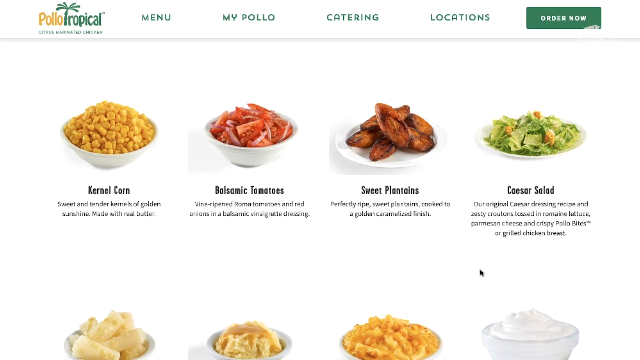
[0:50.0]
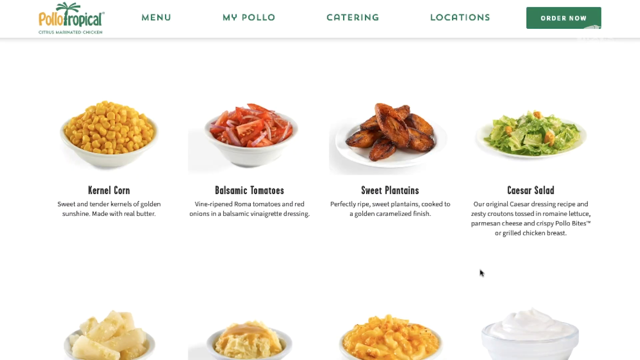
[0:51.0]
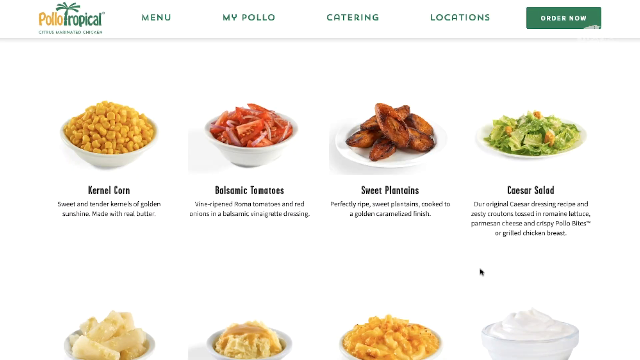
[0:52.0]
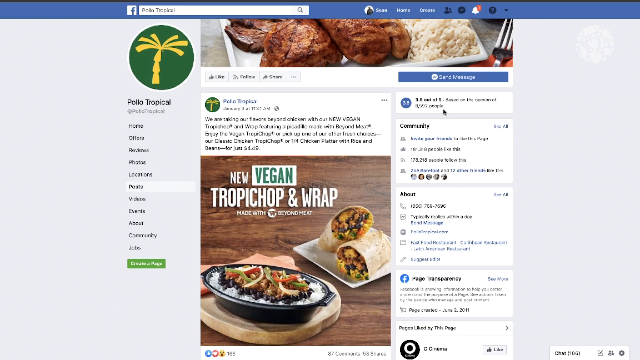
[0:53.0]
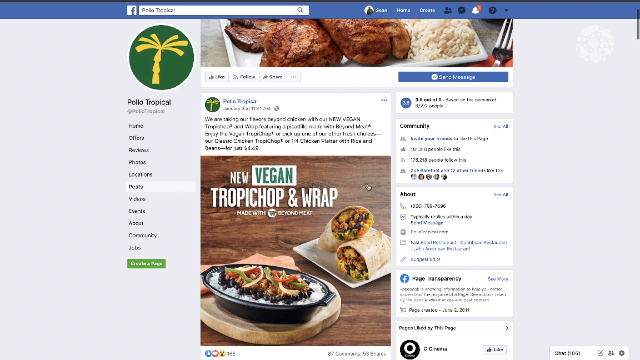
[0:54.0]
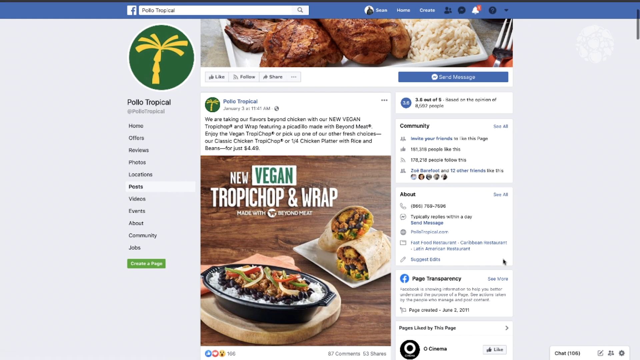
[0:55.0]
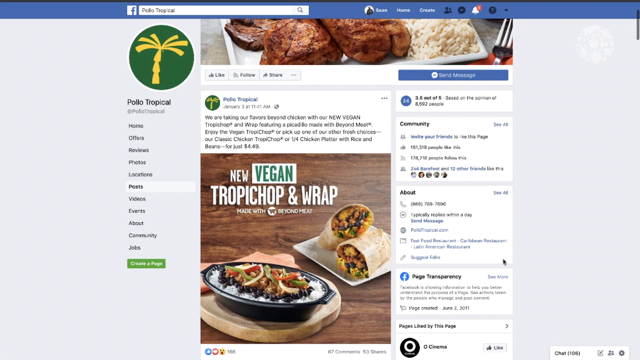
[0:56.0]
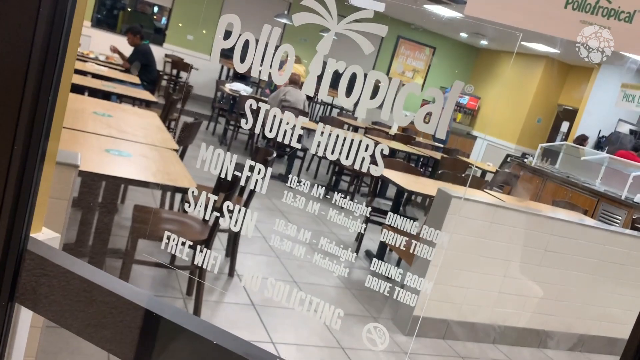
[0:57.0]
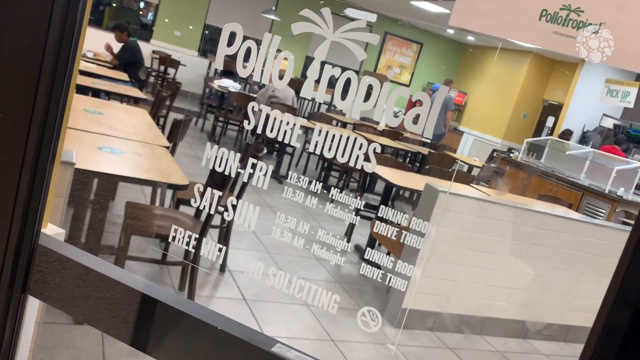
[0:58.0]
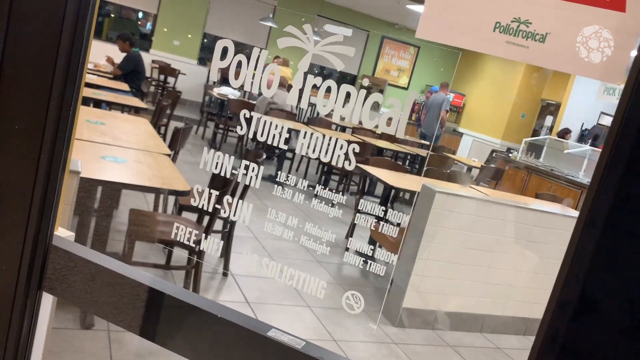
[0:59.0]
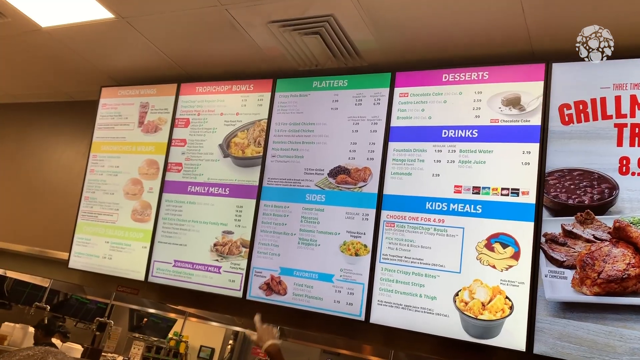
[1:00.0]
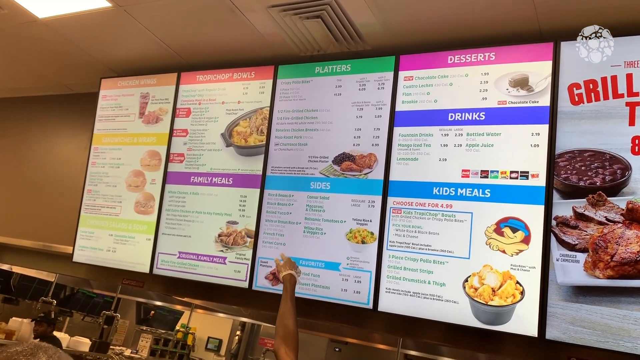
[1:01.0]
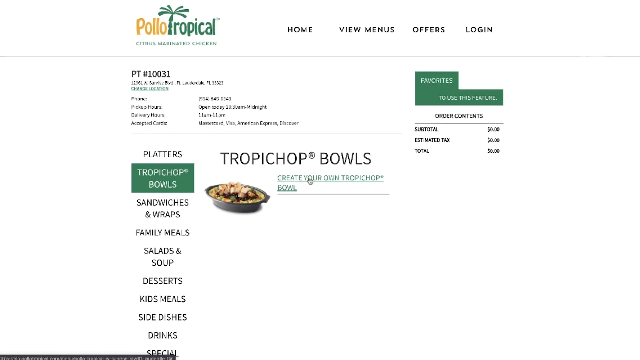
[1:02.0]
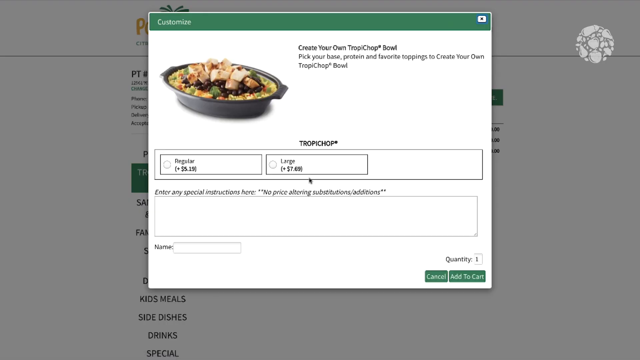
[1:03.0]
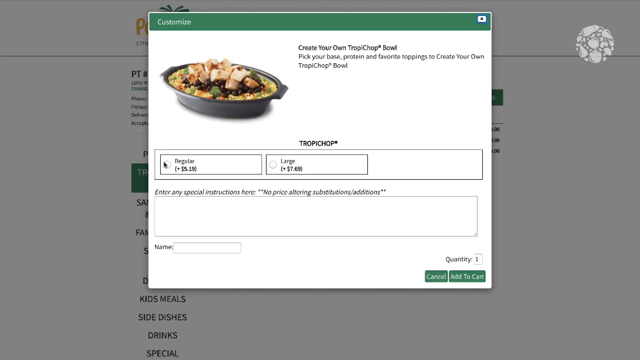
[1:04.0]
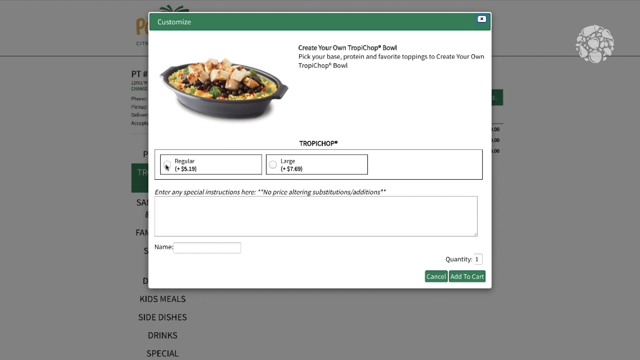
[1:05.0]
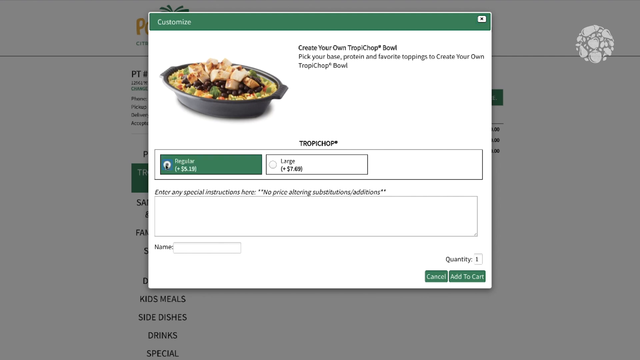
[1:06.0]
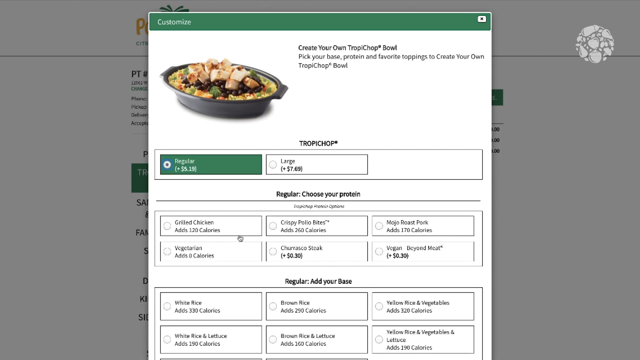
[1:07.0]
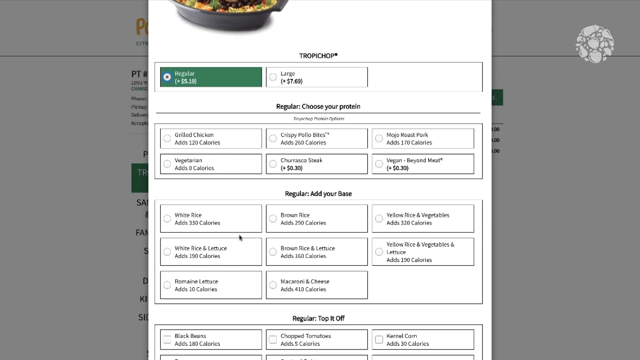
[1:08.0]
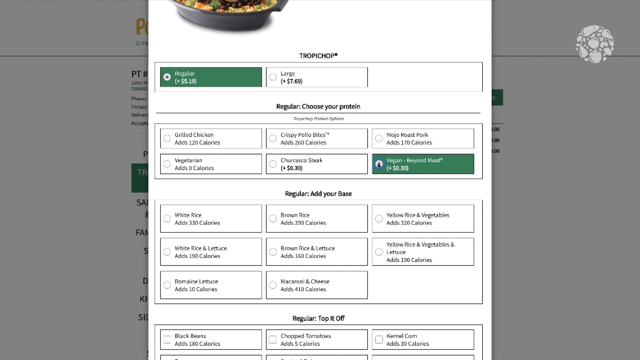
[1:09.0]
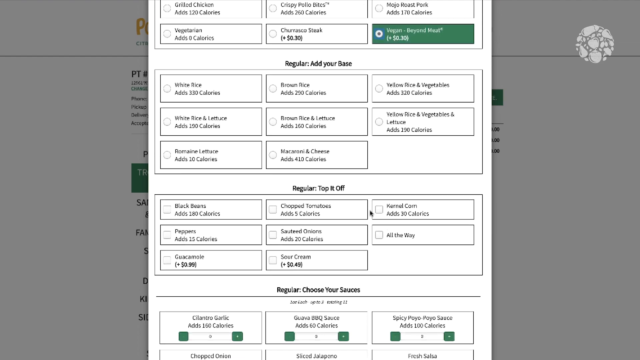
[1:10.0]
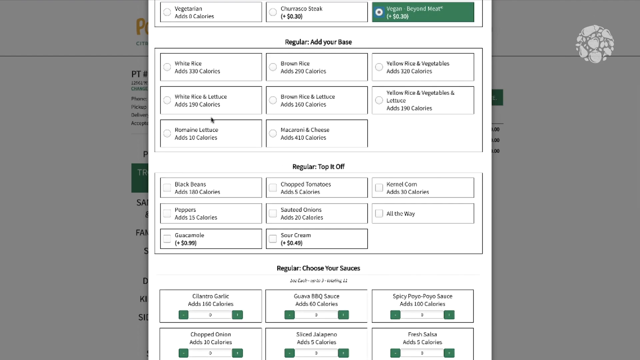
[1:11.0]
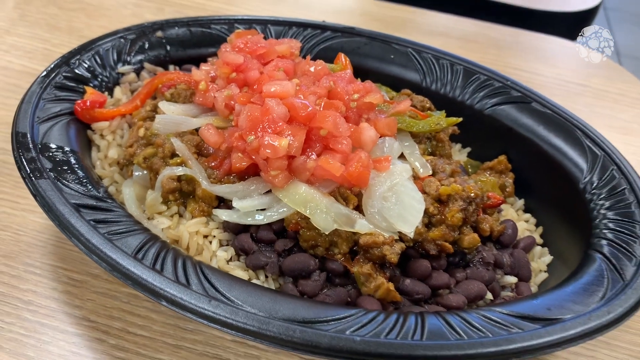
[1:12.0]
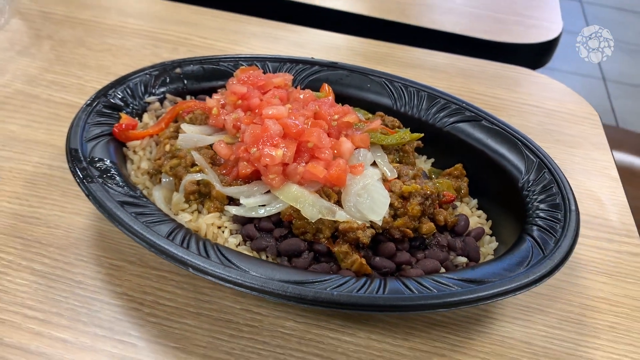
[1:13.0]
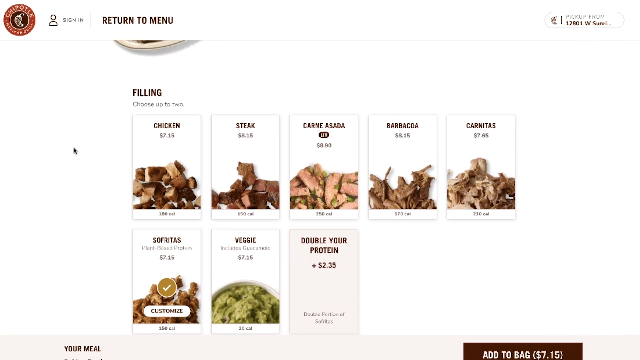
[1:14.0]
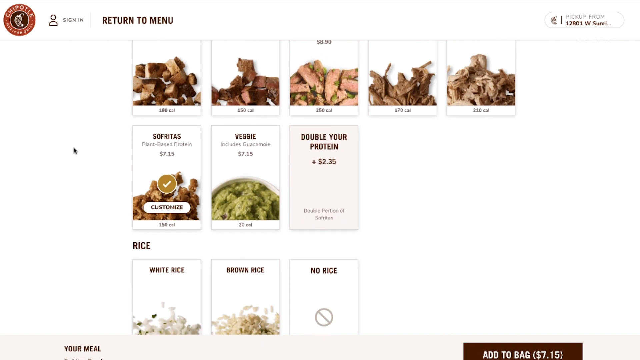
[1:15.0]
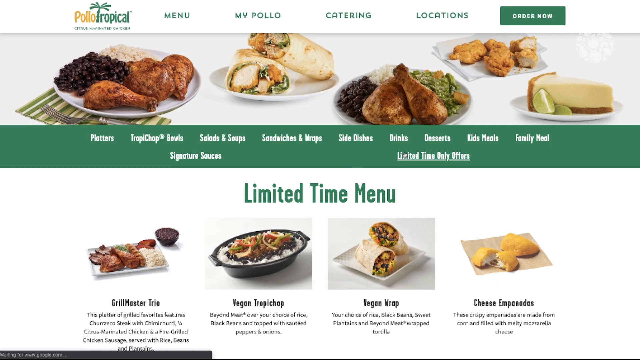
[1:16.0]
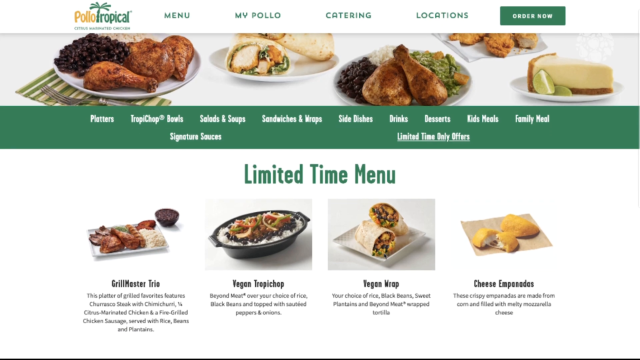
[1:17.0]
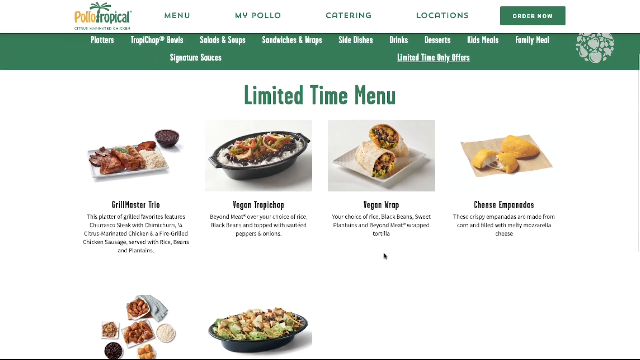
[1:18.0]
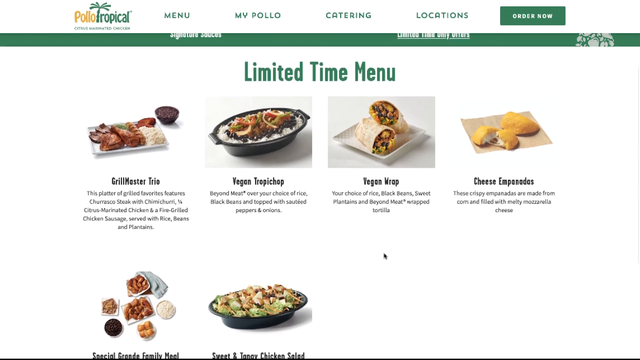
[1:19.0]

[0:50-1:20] Several foods are on display: kernel corn labeled "sweet and tender kernel of golden sunshine made with real butter," balsamic tomatoes, sweet plantains and Caesar salad. A Facebook page shows a post about the new vegan choppy chop and wrap. A Customize button appears for selecting what to include. An item served in a bowl offers a choice of rice, beans and veggies, with fillings of chicken, steak, barbacoa, carnitas, veggie, or double your protein, and white and brown rice options.